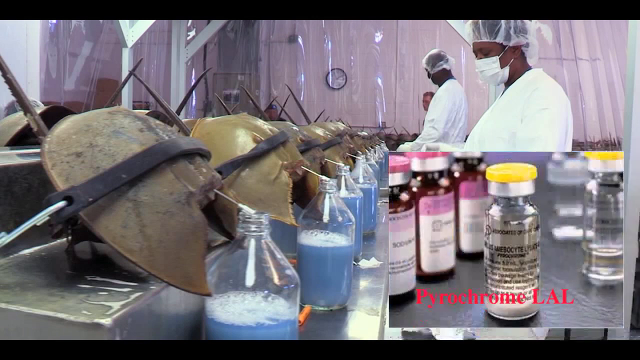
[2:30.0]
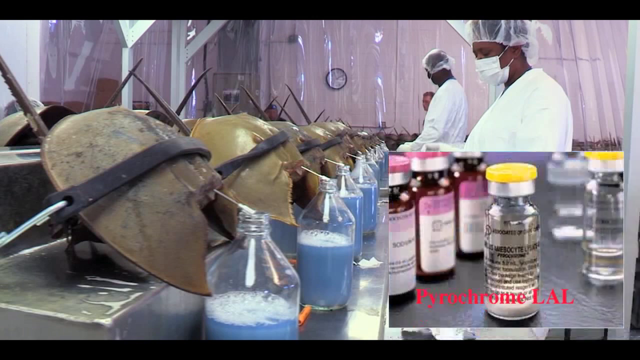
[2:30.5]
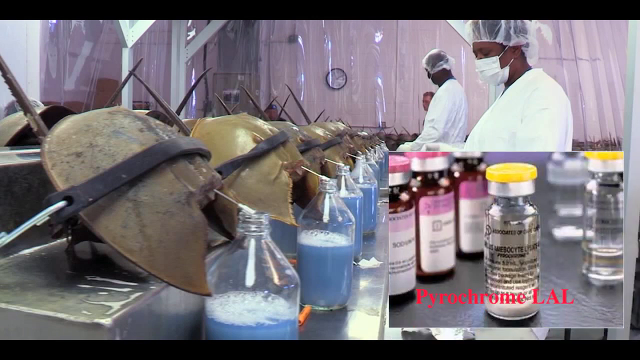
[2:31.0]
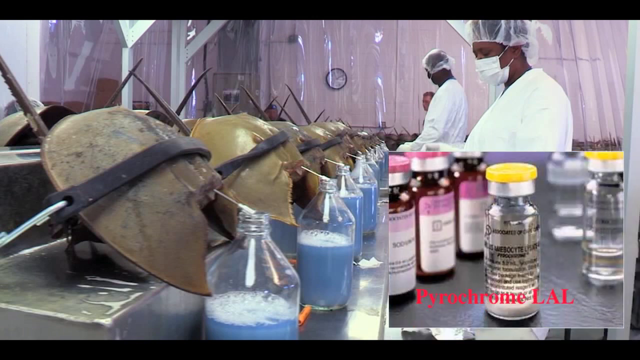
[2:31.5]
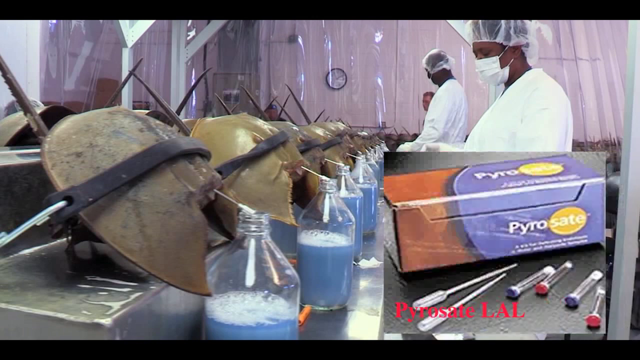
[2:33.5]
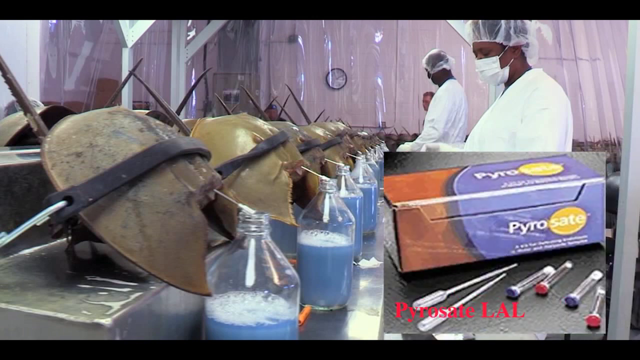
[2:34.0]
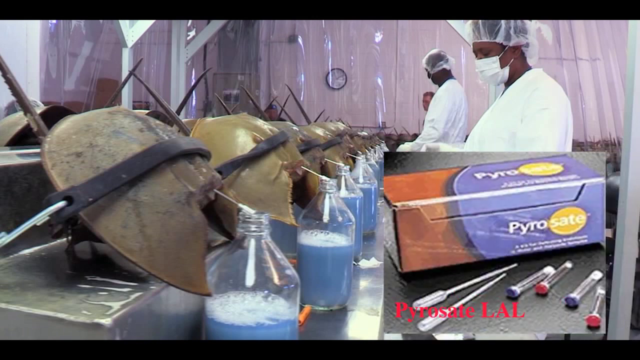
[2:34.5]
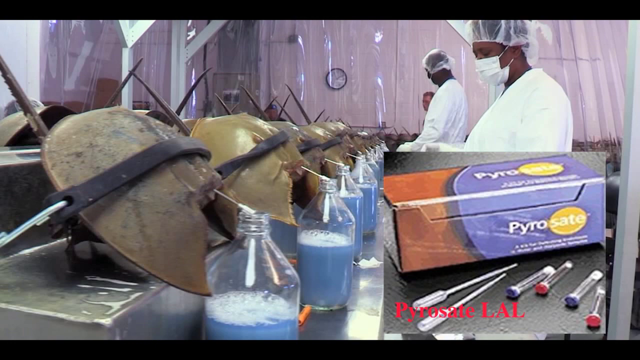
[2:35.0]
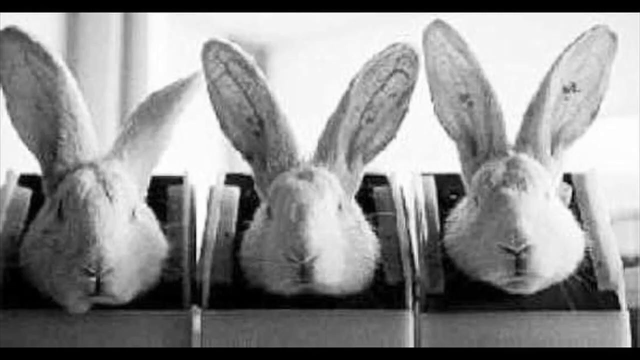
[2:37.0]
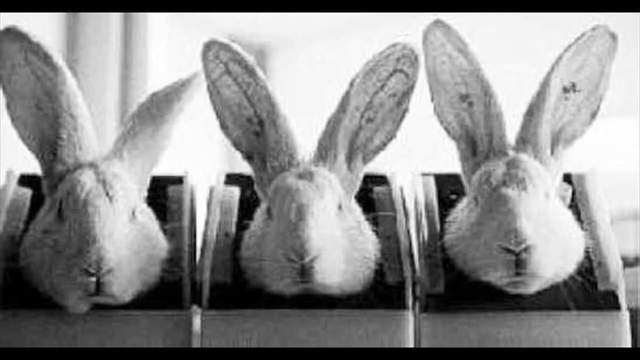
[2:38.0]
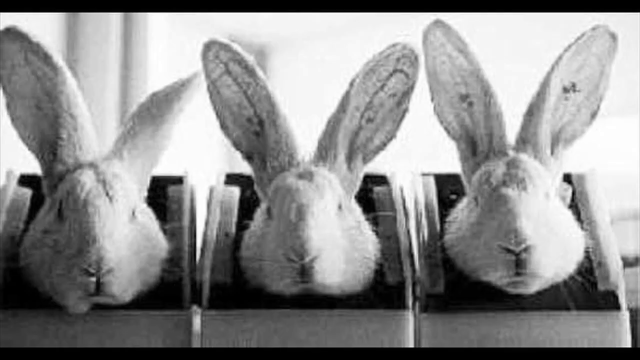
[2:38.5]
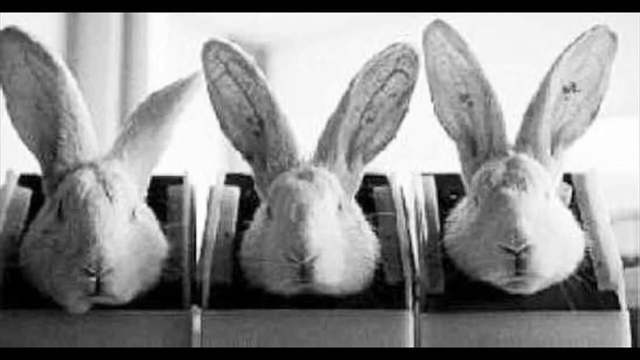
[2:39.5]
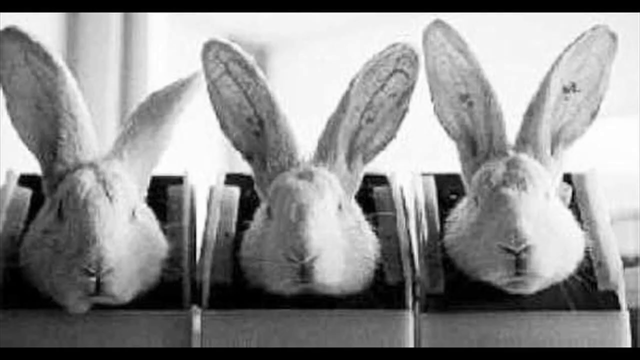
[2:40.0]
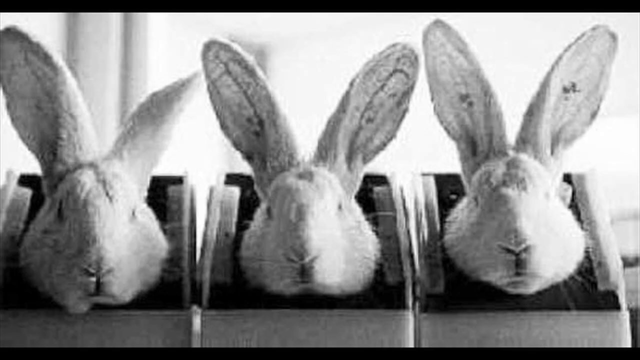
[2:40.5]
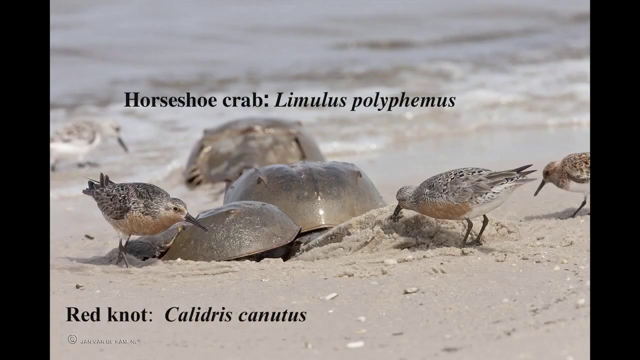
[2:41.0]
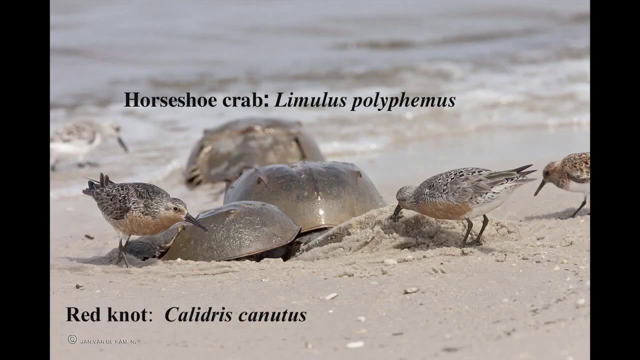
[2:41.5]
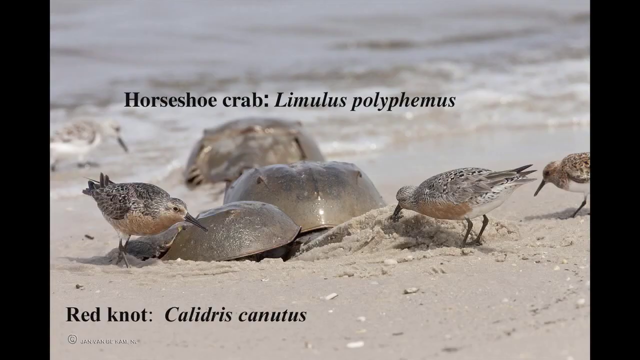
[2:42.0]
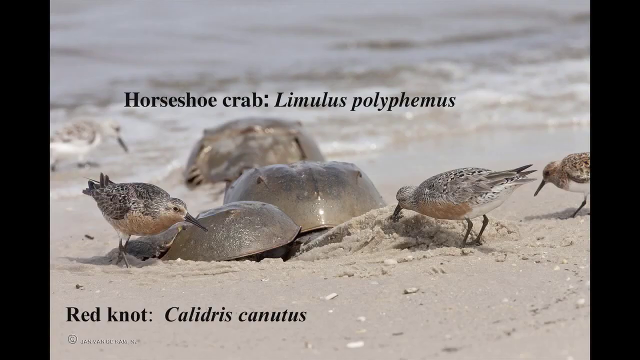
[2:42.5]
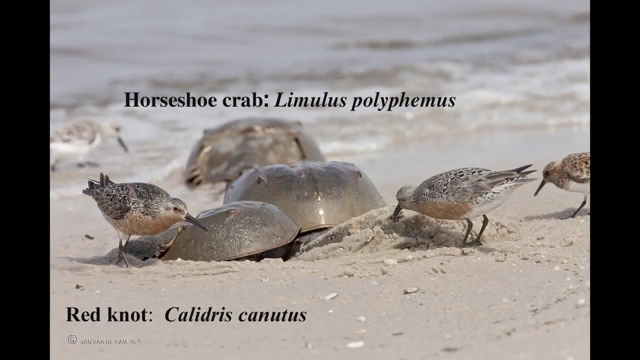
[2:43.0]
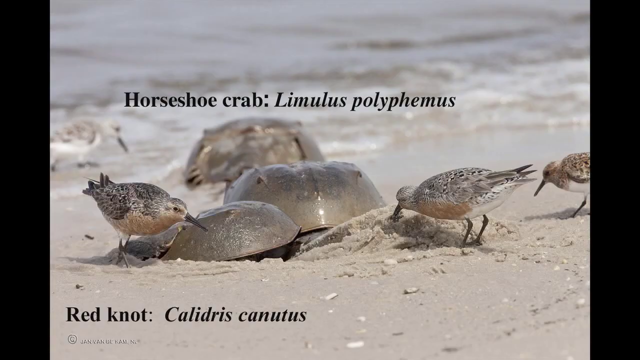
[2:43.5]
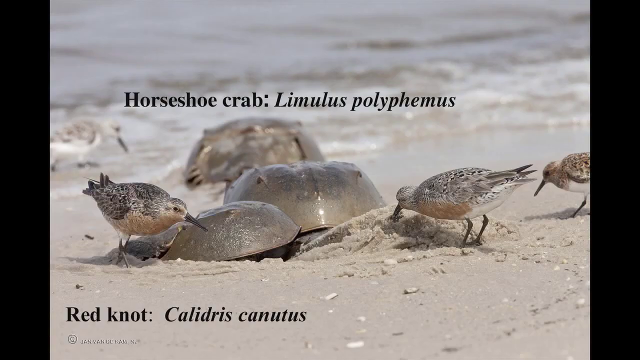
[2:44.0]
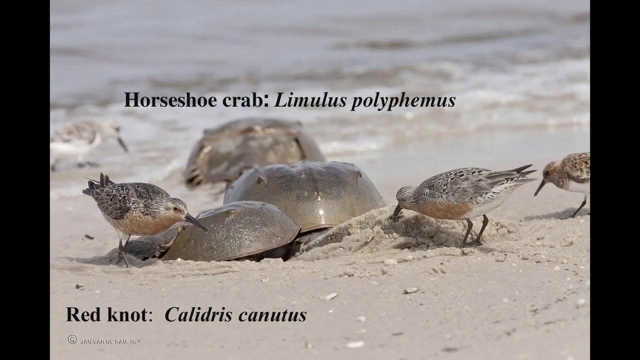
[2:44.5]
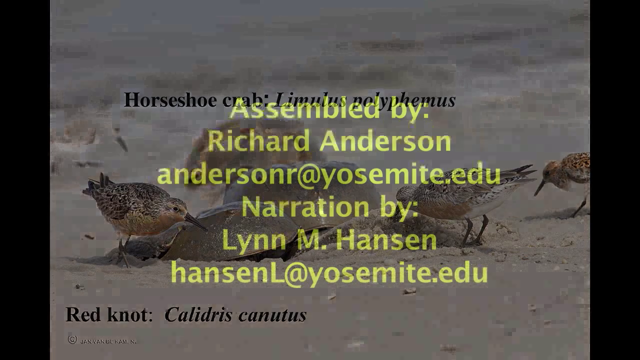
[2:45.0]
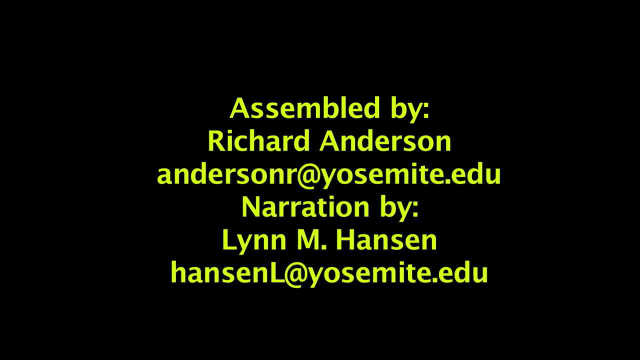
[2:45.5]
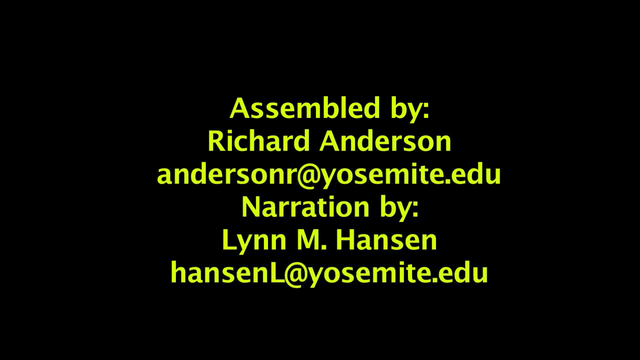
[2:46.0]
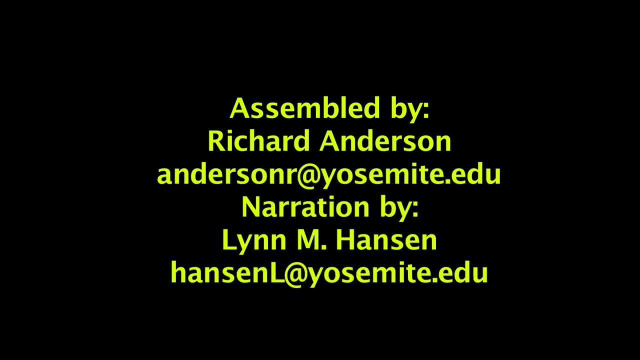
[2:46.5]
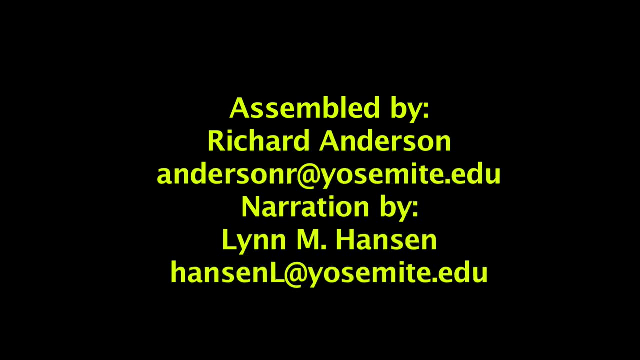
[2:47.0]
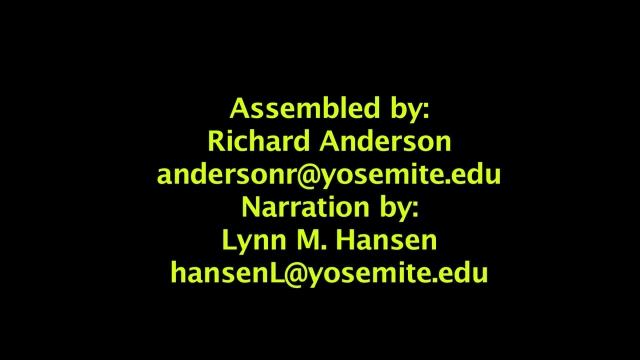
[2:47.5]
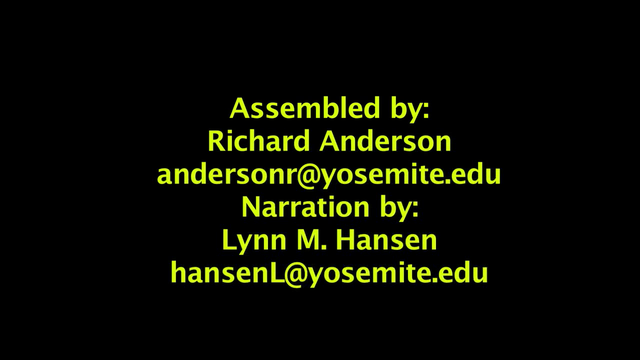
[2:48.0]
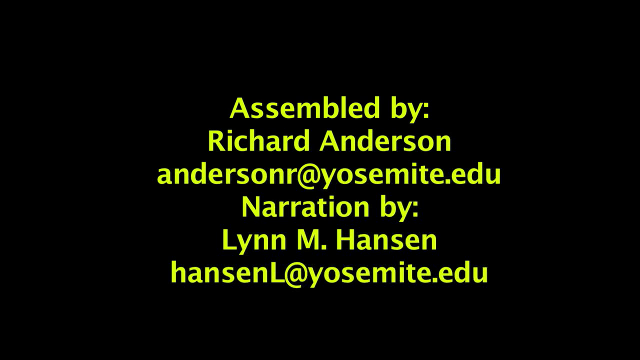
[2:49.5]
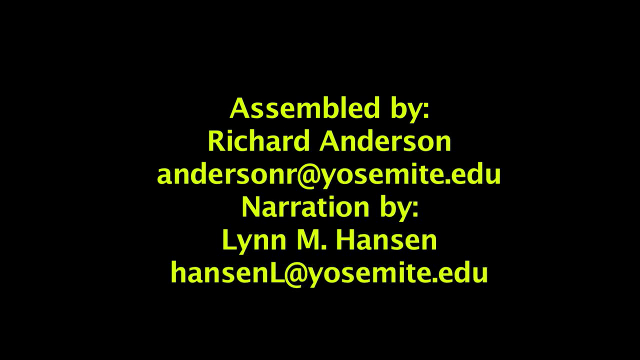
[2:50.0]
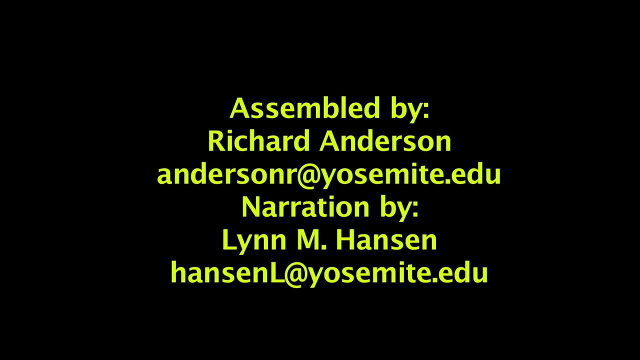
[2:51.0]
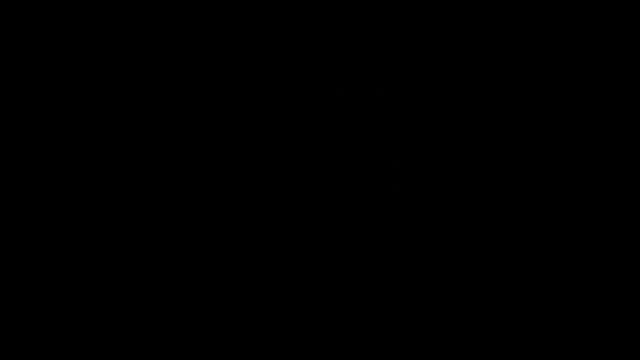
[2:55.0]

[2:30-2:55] The same still photo remains, depicting the process of extracting LAL. Different uses of the horseshoe crab blood, which is copper-based, are shown, along with a black and white picture of three bunny heads on a table. Another picture shows horseshoe crabs mingling with red knot birds on a beach. At the end, a black screen shows yellow text that says "assembled by Richard Anderson. AndersonR at Yosemite.edu. The narration is by Lynn M. Hanson. Email at HansonL at Yosemite.edu", and then the video fades to black.